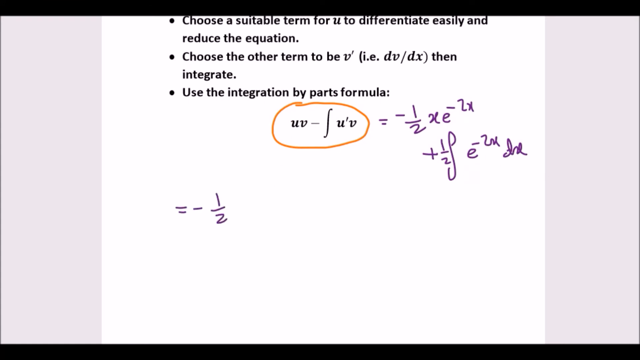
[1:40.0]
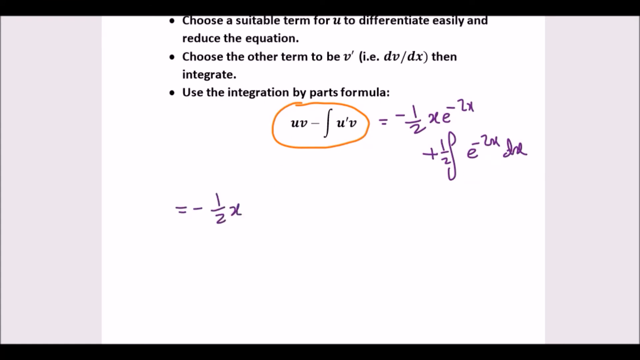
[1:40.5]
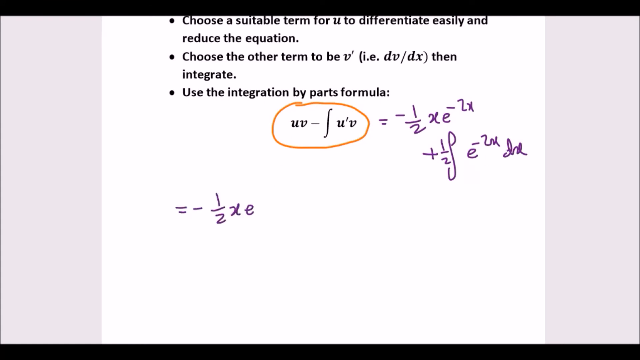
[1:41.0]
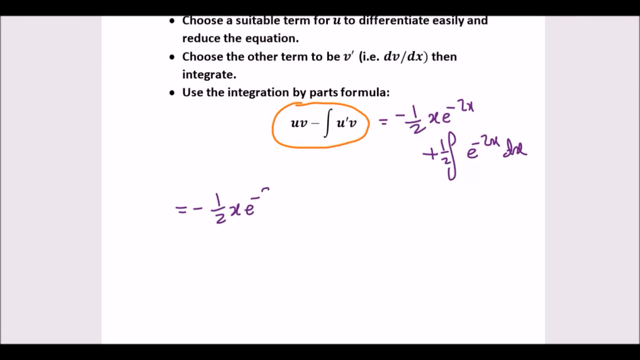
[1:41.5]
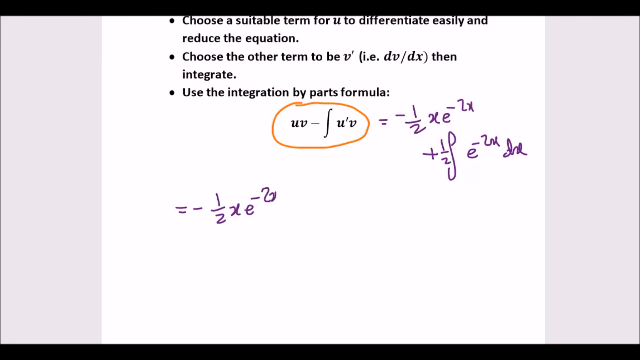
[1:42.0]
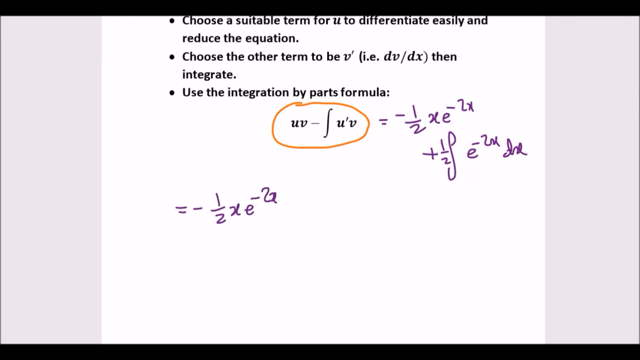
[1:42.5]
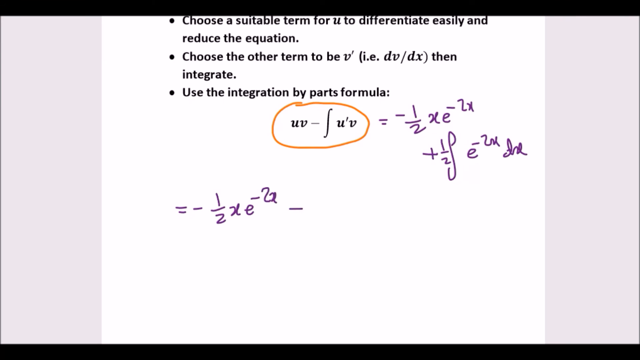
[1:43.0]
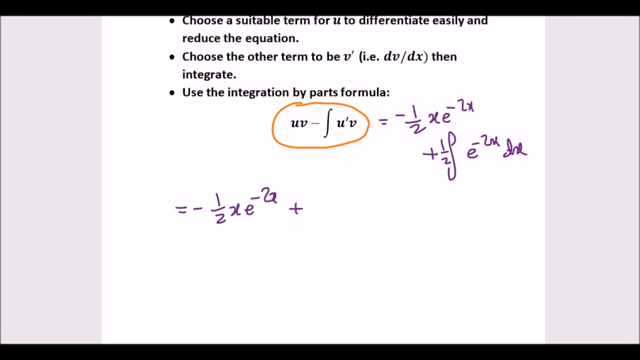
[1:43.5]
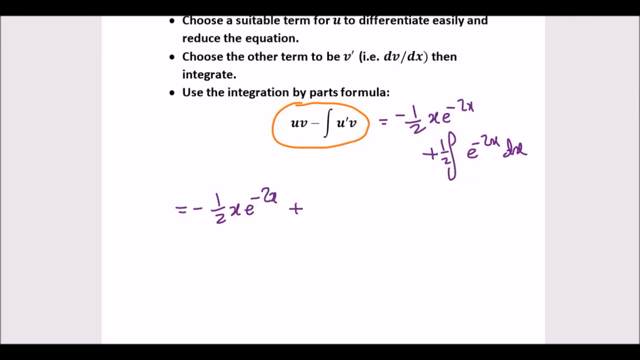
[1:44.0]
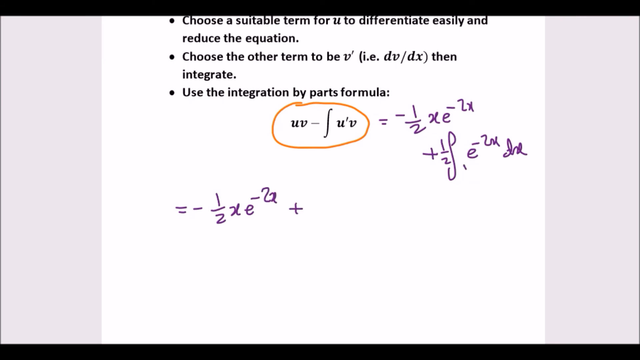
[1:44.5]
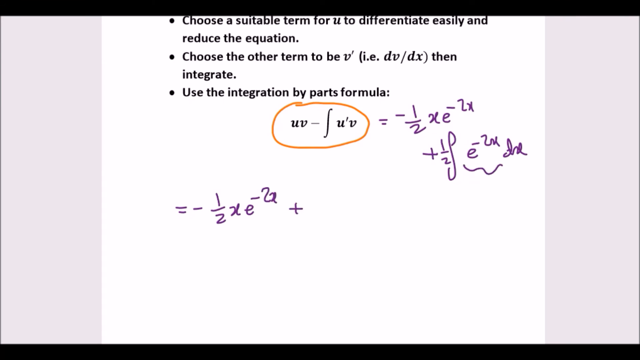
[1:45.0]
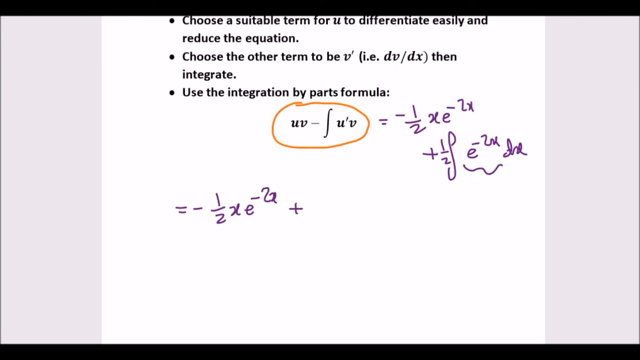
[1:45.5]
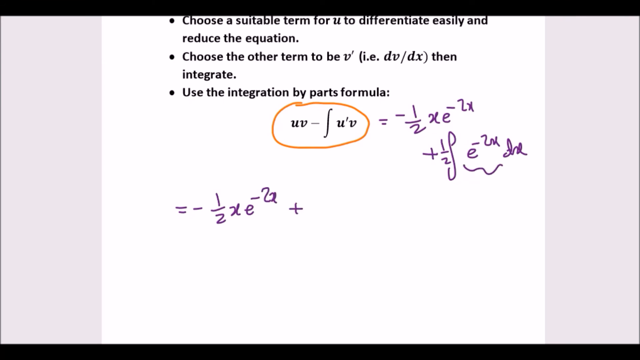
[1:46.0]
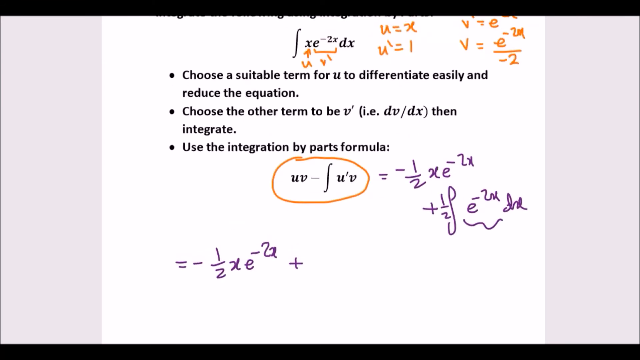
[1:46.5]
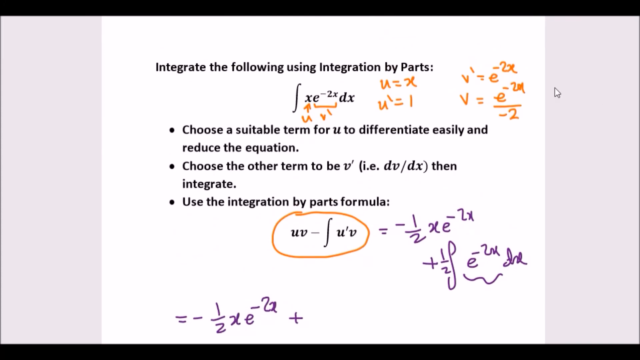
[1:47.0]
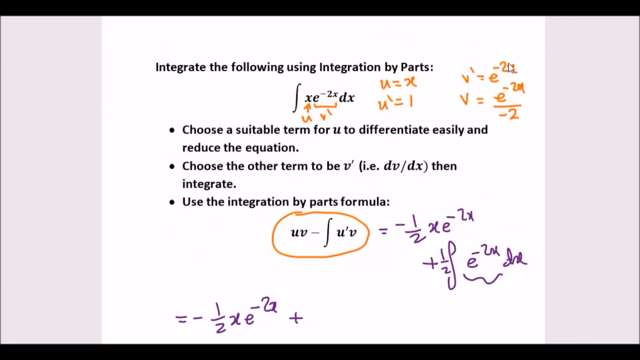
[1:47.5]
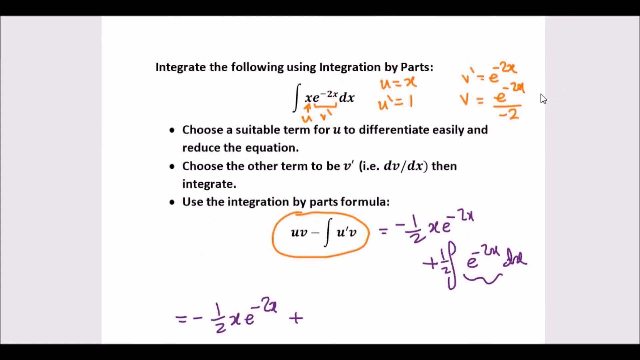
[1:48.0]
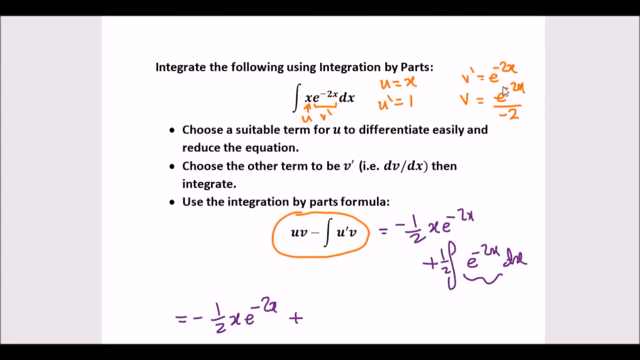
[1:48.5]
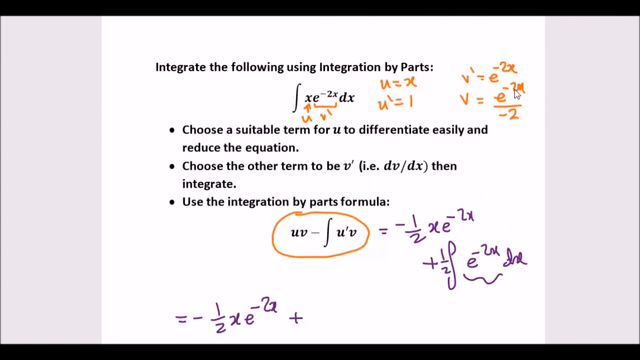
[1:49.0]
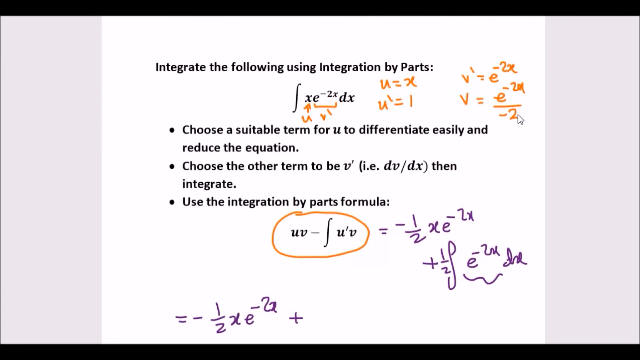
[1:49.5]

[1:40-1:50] At the bottom of the slide, the user continues writing: equals minus a half of x times e to the minus 2x, plus something not yet written. Instead of finishing, the user points with the mouse to the equality written earlier in orange at the top of the slide next to the first formula, the one stating that v equals e to the 2 minus x over minus 2.